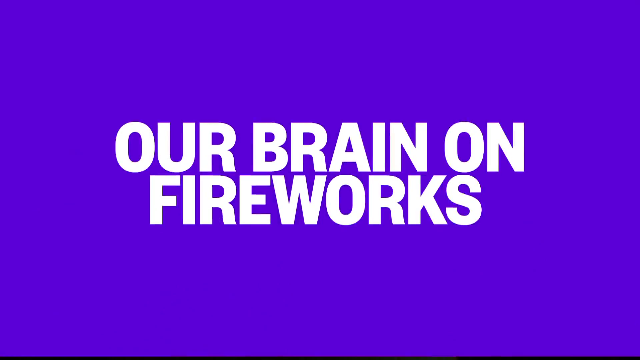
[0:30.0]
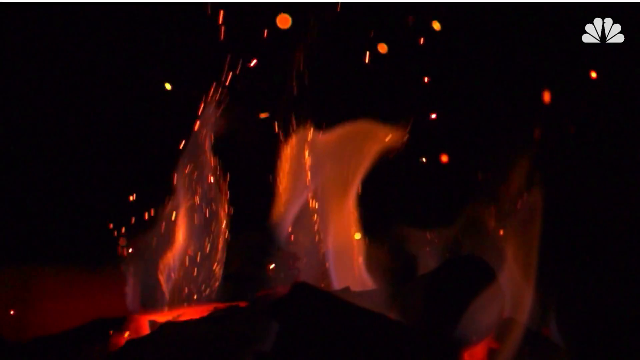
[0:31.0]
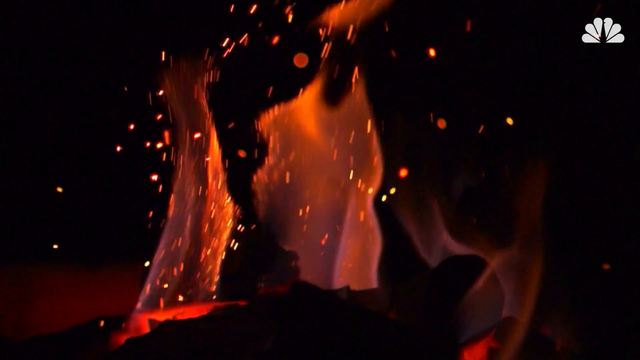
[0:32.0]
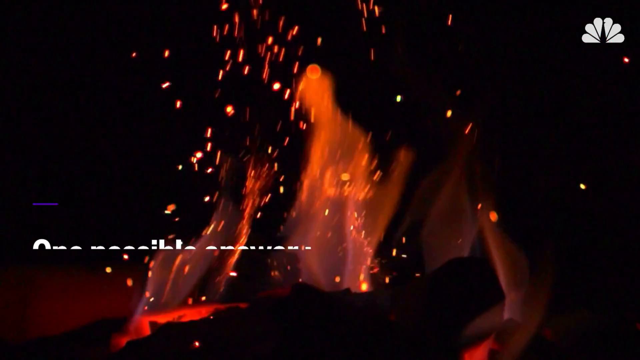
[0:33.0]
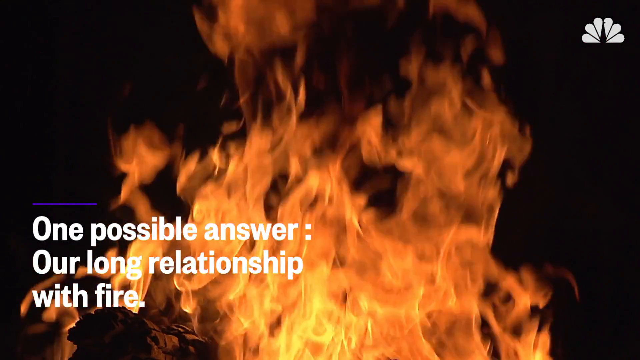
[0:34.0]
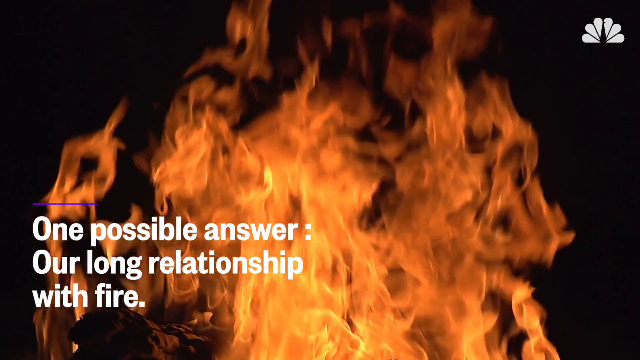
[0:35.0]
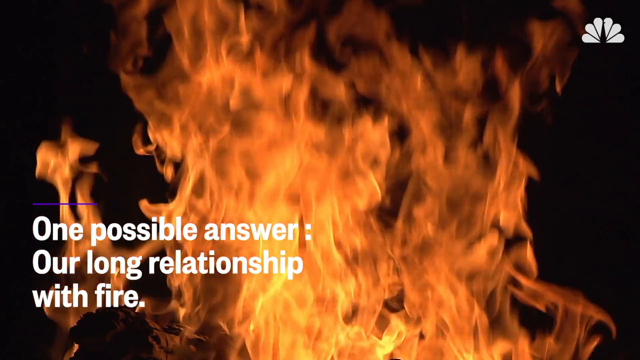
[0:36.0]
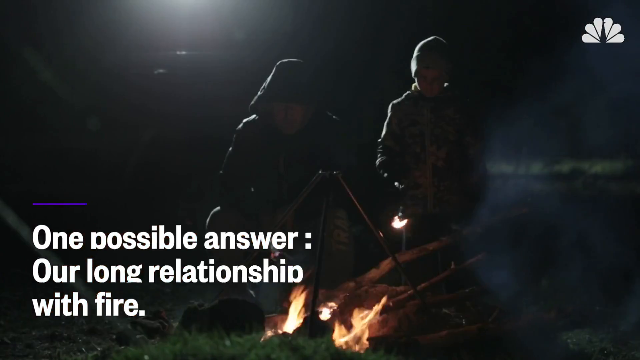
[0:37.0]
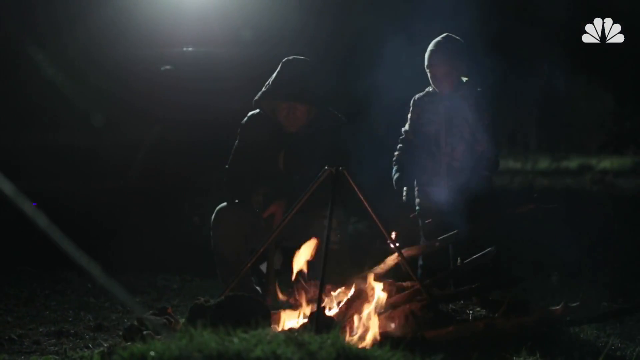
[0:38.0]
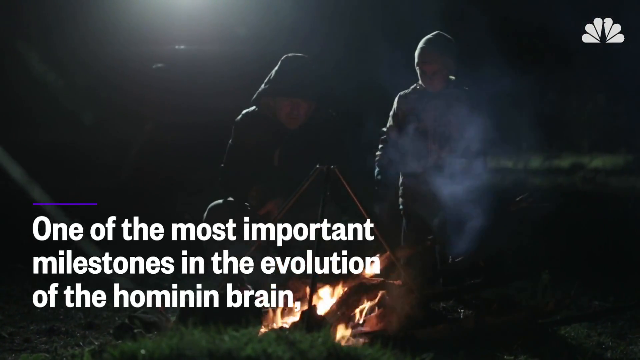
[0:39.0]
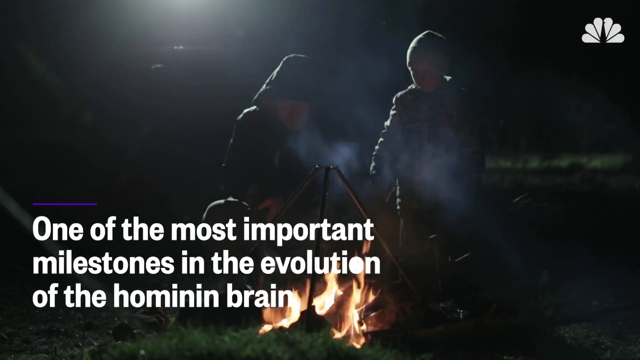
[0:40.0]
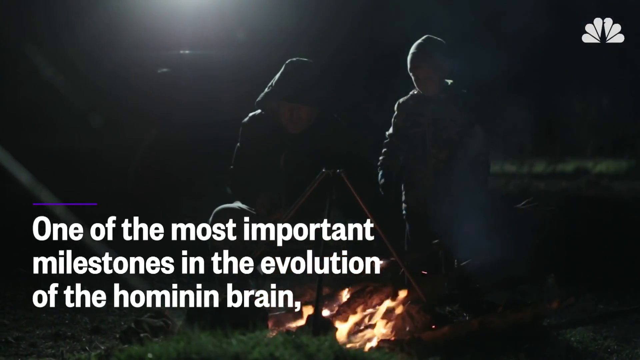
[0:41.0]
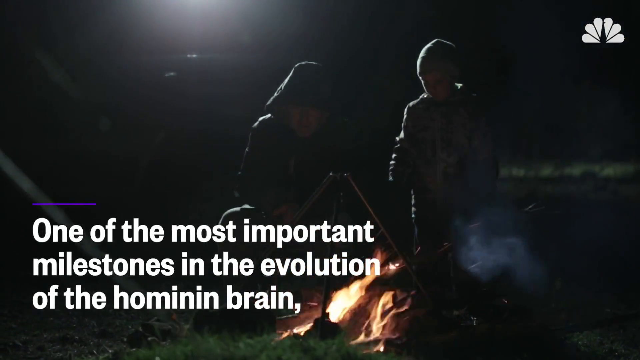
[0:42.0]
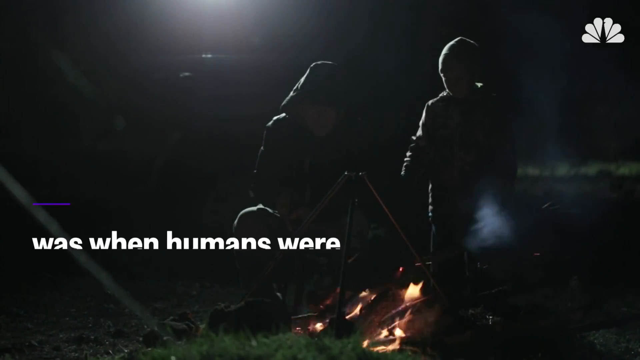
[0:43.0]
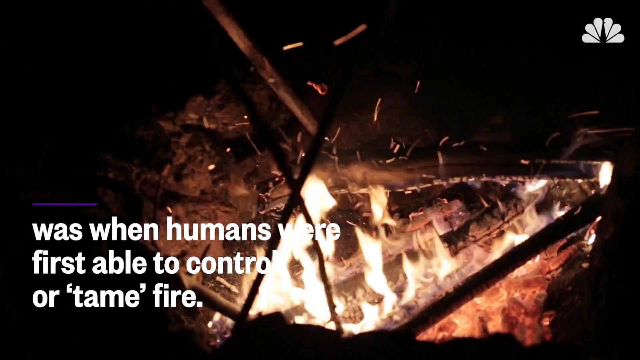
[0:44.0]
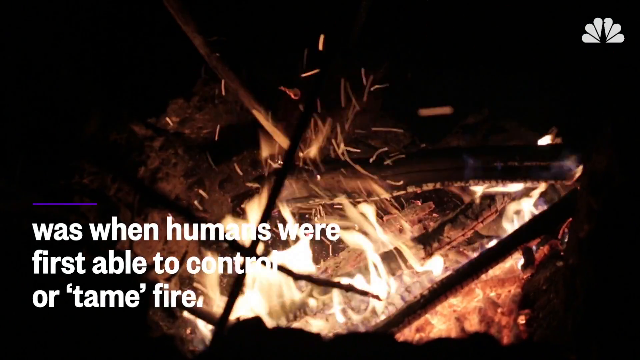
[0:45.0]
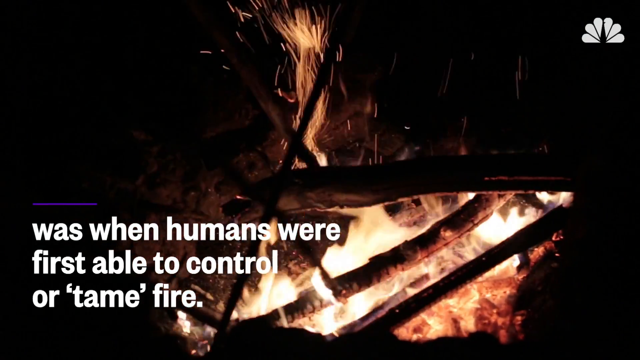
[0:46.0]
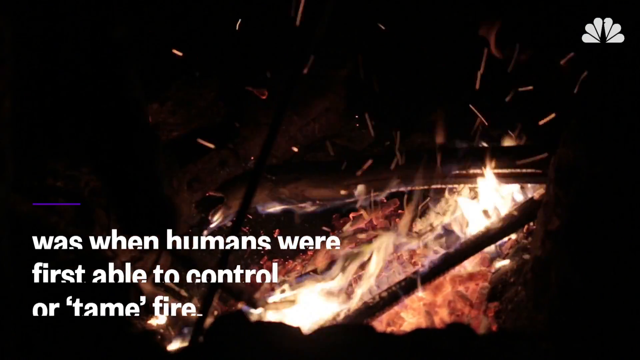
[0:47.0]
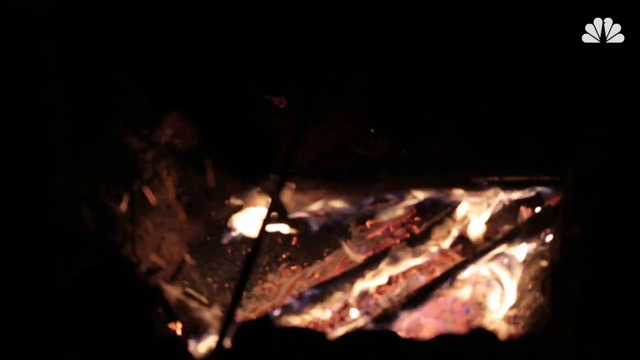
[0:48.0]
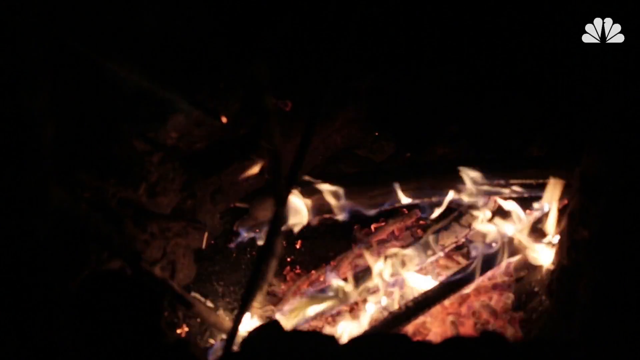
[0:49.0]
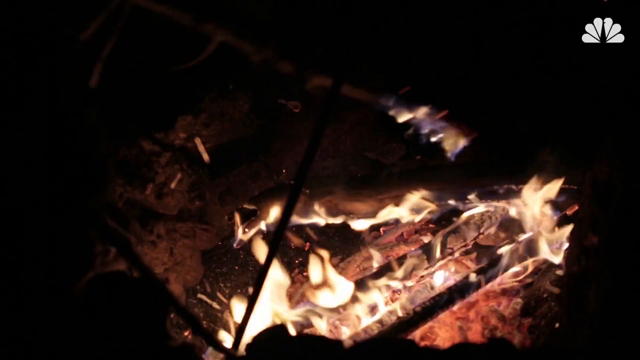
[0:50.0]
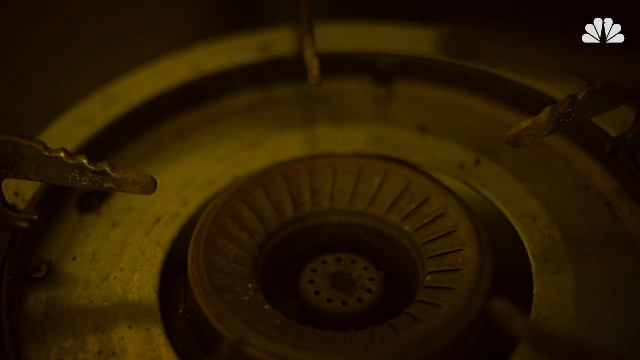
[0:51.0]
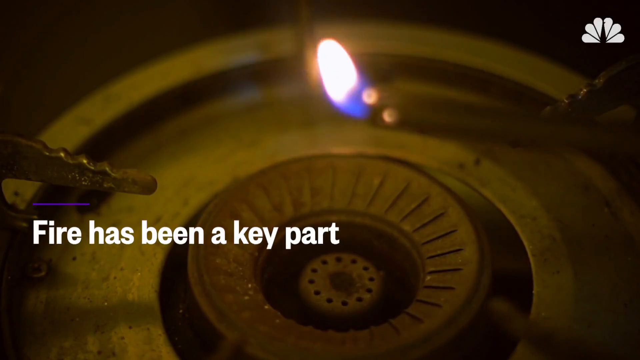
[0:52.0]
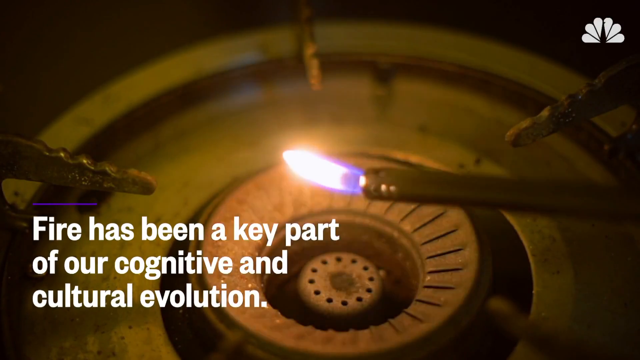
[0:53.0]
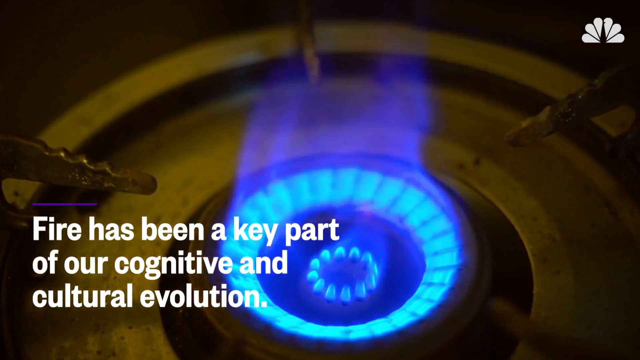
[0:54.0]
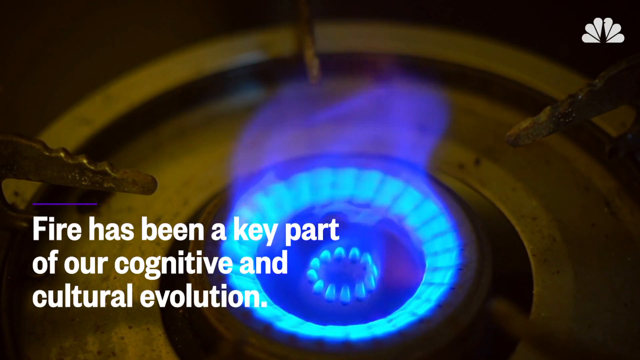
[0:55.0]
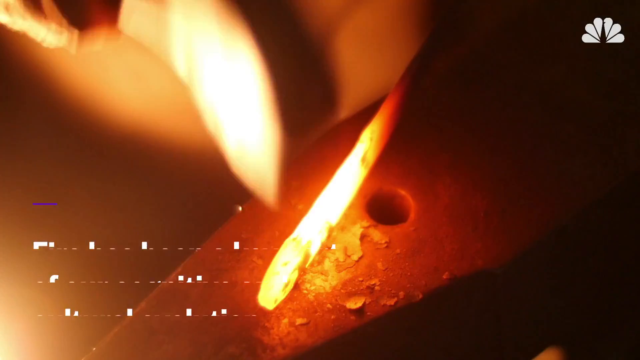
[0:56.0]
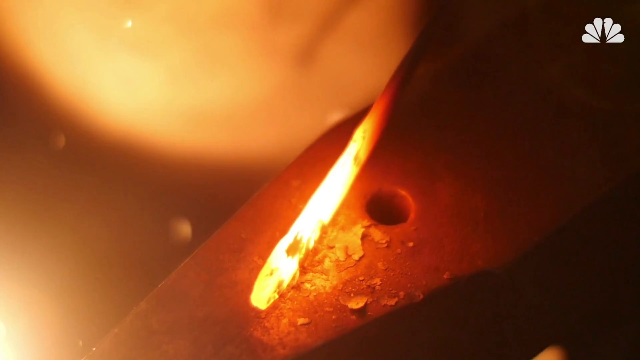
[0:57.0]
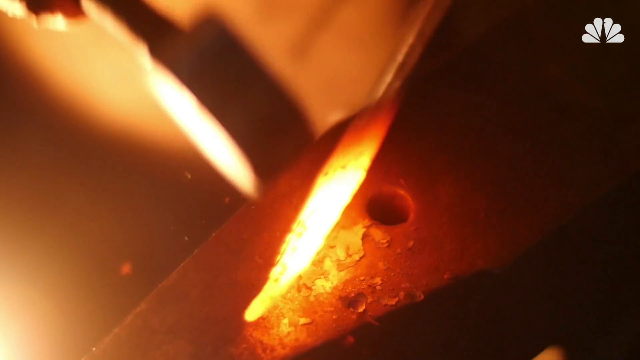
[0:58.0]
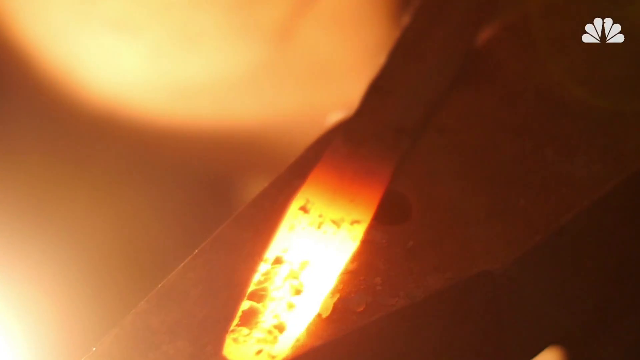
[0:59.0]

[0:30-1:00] A purple background shows the text "our brain on fireworks". The video then shows a fire radiating orange and yellow tones. Two people are next to this fire, outdoors, possibly on a field. Text on the screen reads "one of the most important milestones in the evolutions of the hominin brain". A hob is then lit with a lighter; as the gas is lit and a flame is produced, the screen says "Fire has been part of our cognitive and cultural evolution". The lit flame on the hob is bluish. The video appears to be about man's relationship with fire and now with fireworks.